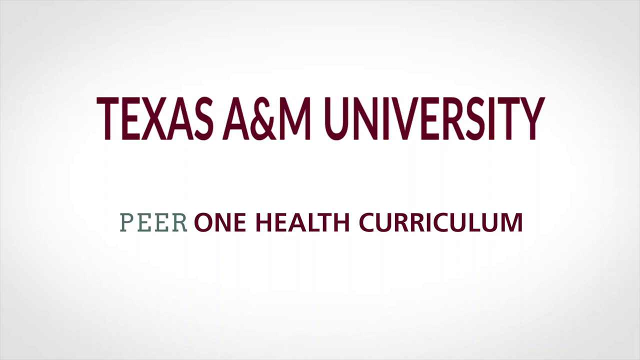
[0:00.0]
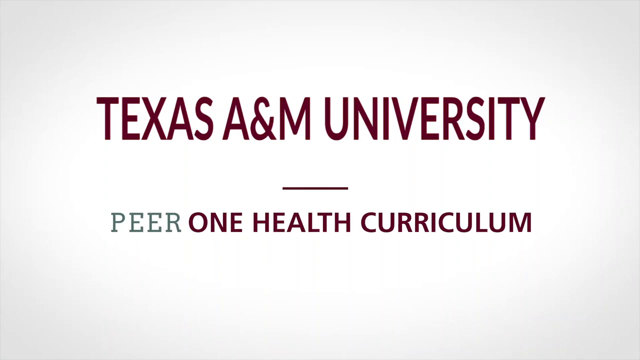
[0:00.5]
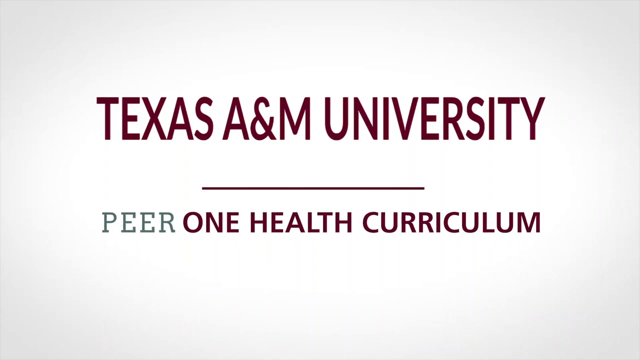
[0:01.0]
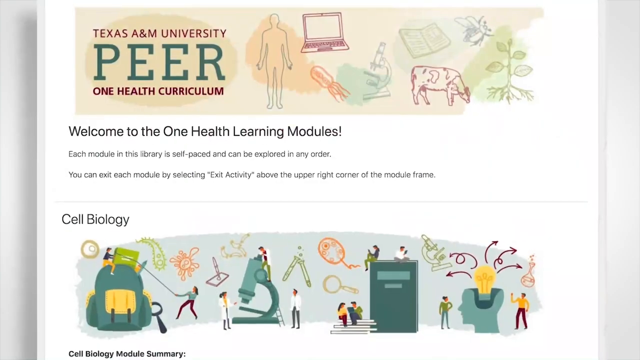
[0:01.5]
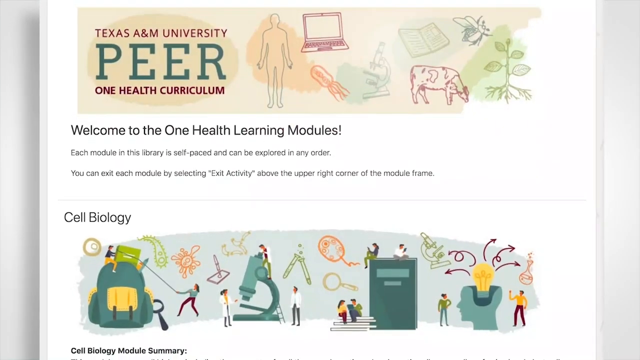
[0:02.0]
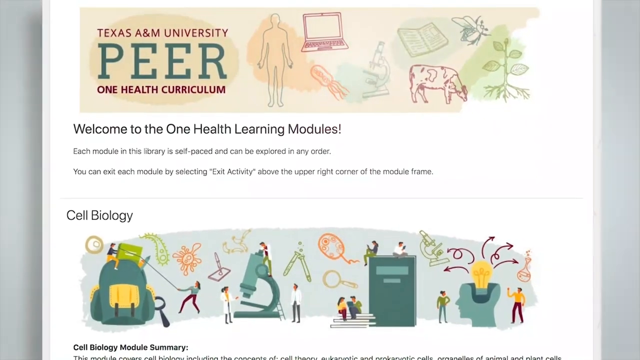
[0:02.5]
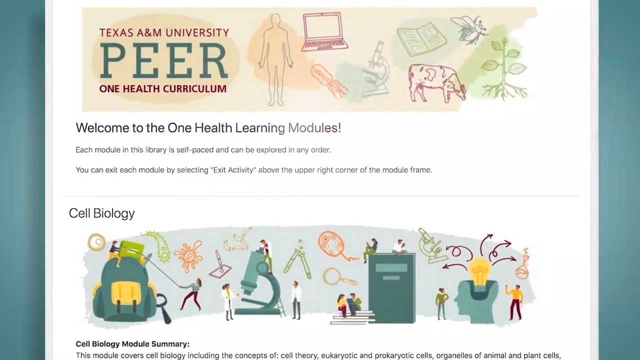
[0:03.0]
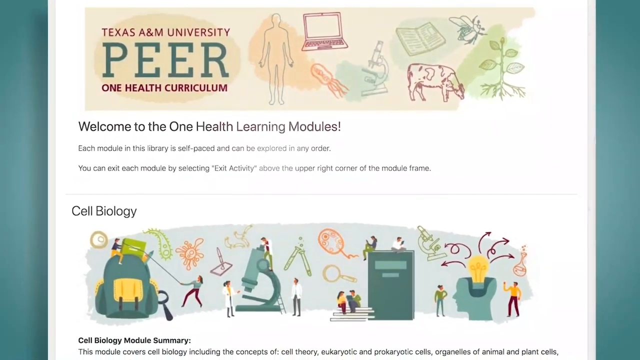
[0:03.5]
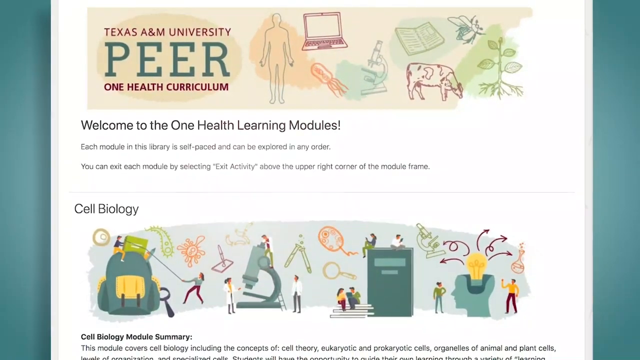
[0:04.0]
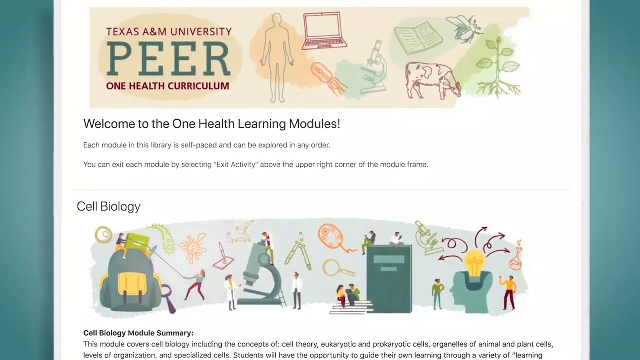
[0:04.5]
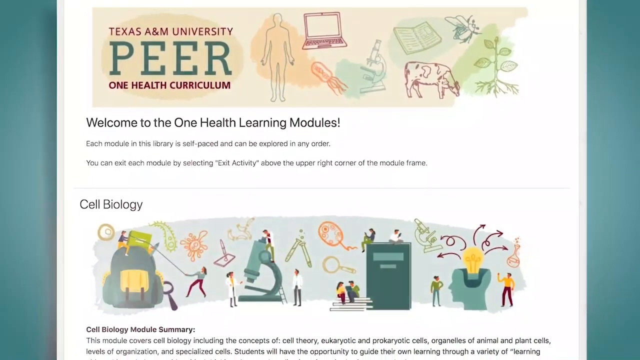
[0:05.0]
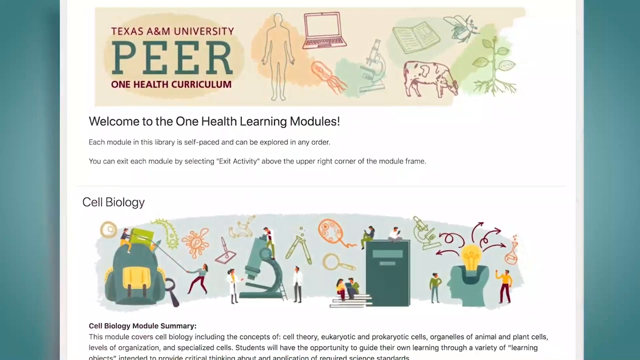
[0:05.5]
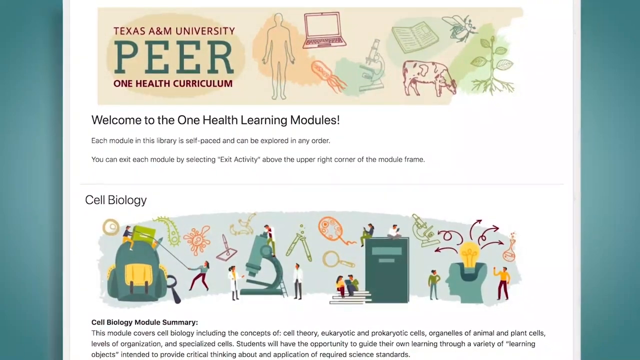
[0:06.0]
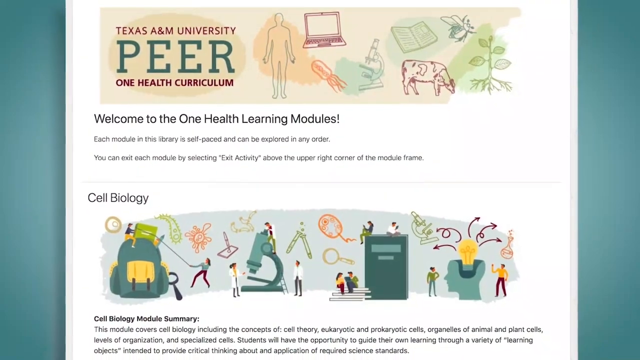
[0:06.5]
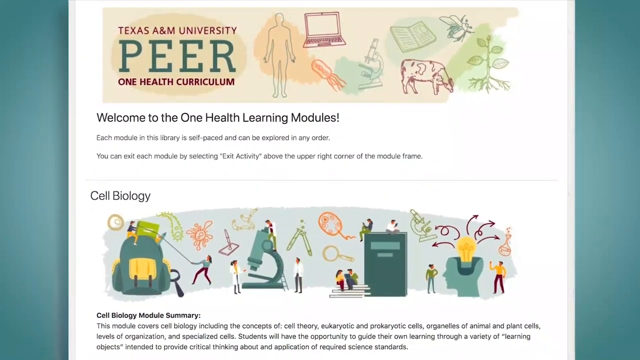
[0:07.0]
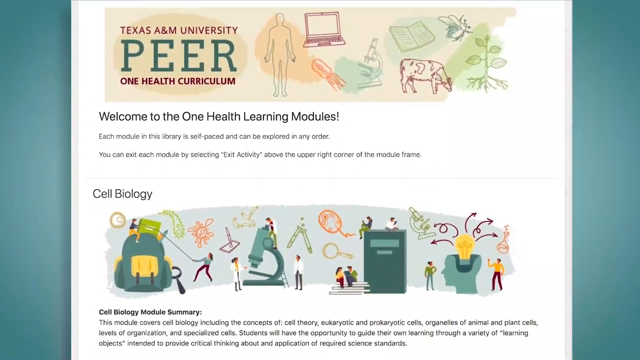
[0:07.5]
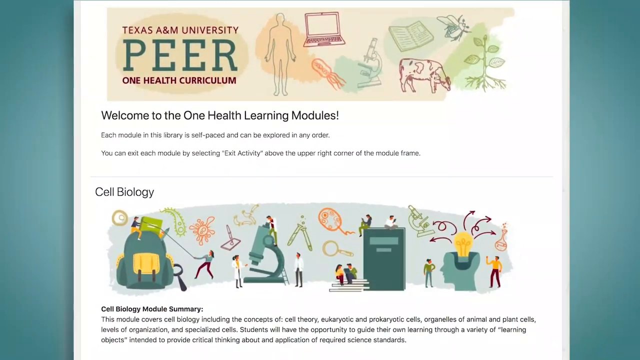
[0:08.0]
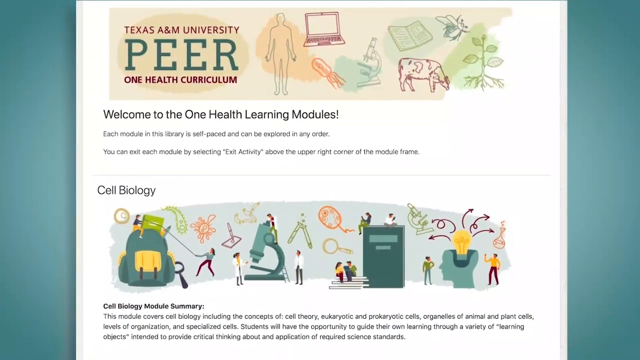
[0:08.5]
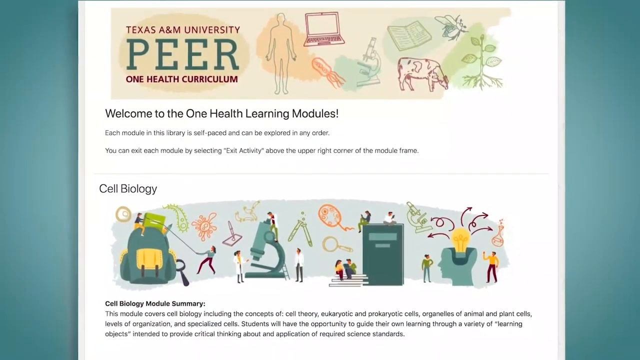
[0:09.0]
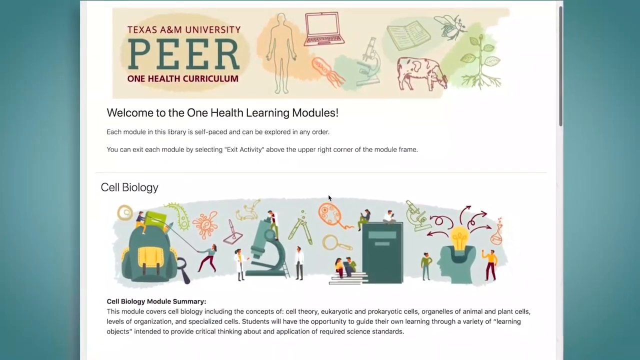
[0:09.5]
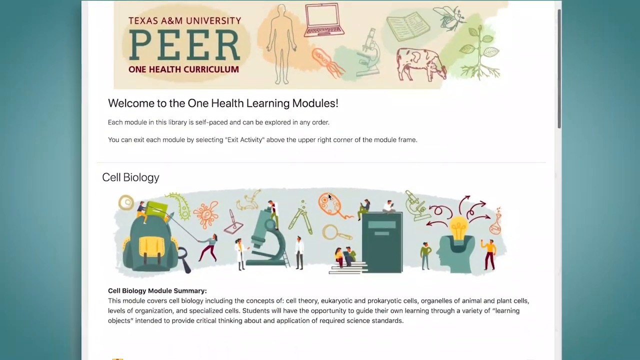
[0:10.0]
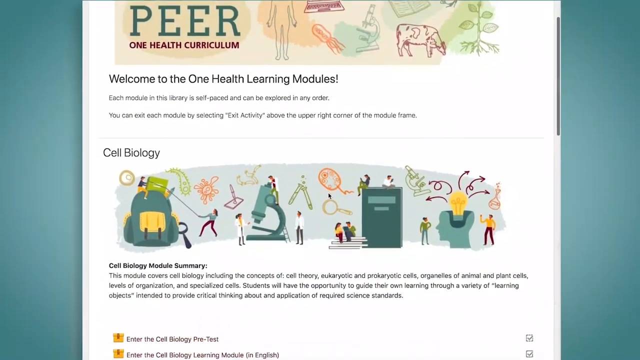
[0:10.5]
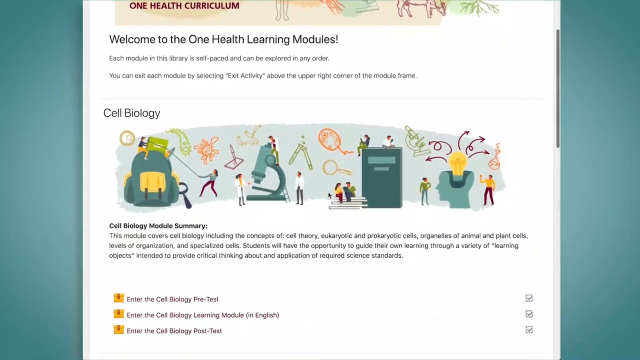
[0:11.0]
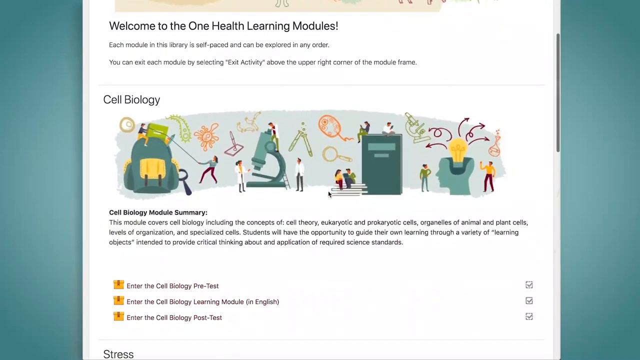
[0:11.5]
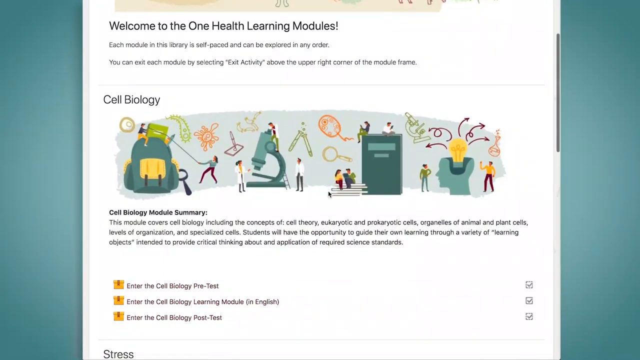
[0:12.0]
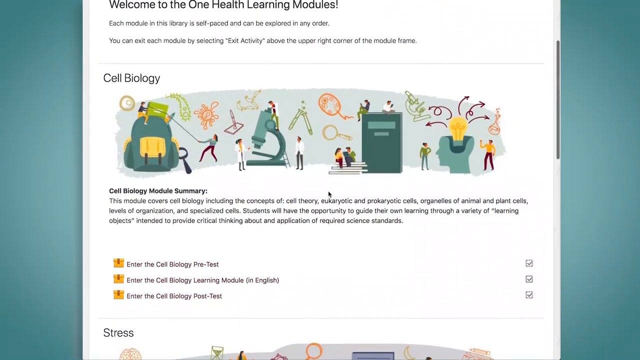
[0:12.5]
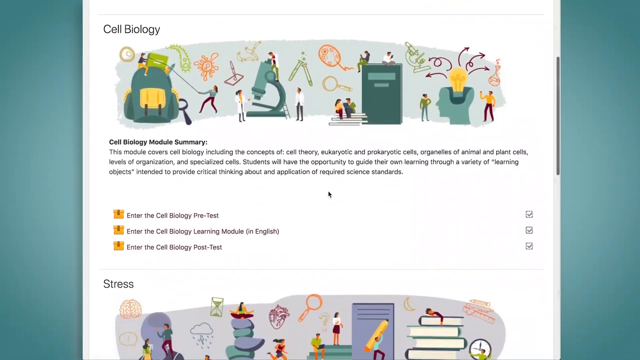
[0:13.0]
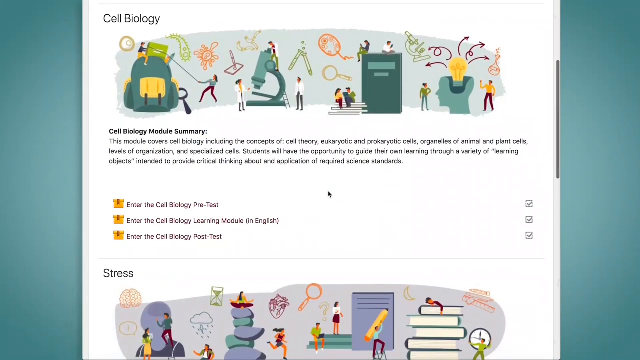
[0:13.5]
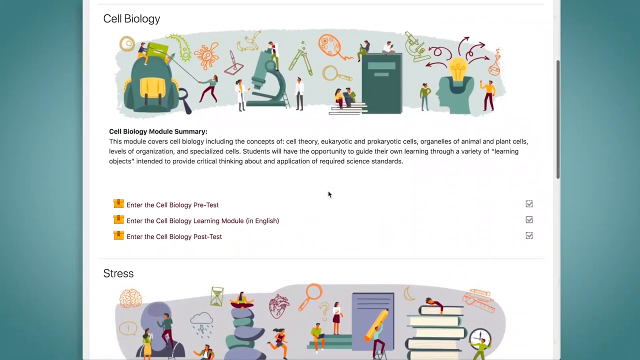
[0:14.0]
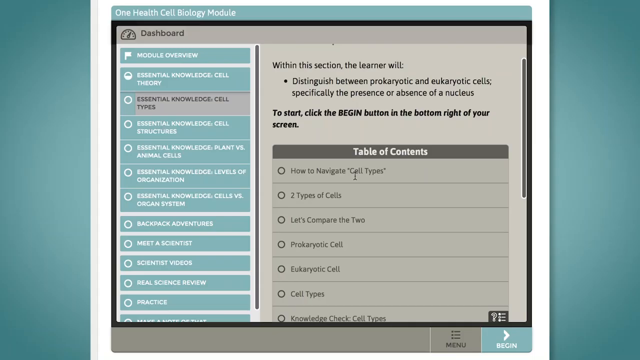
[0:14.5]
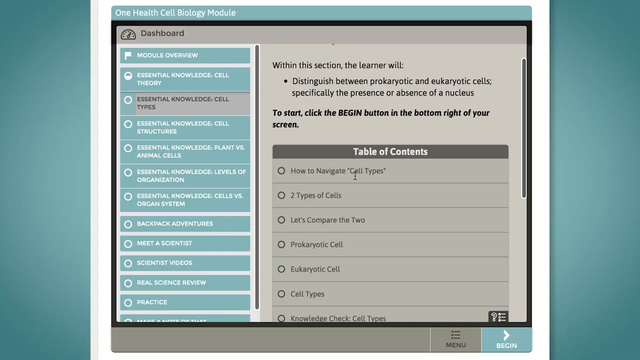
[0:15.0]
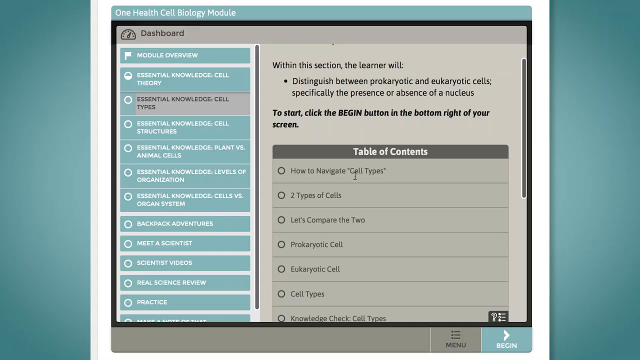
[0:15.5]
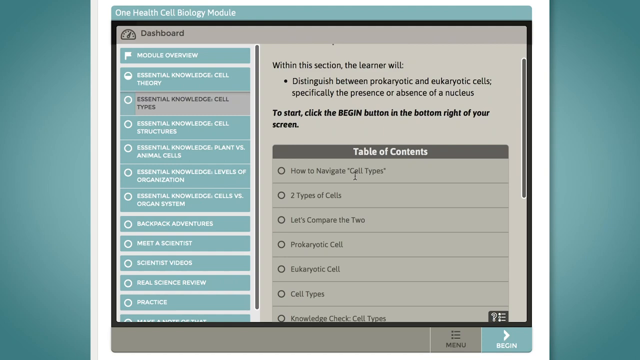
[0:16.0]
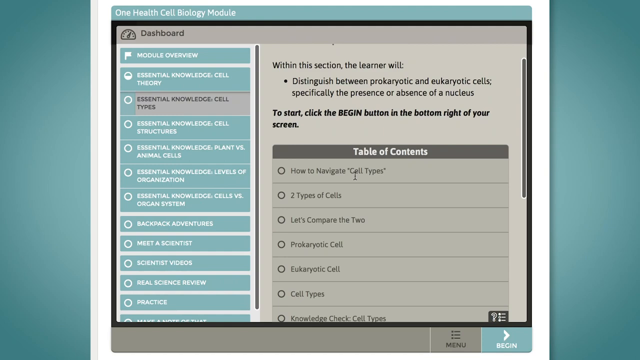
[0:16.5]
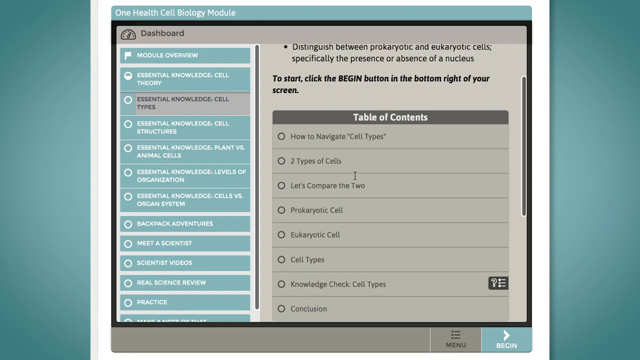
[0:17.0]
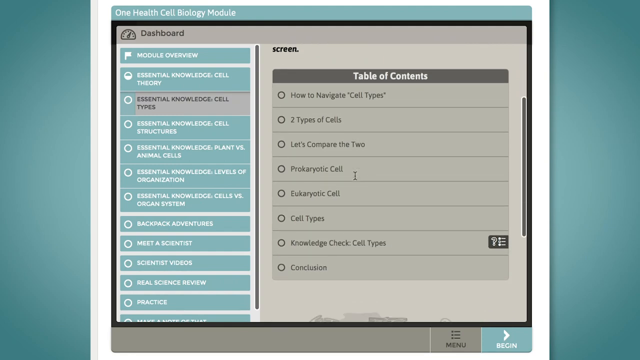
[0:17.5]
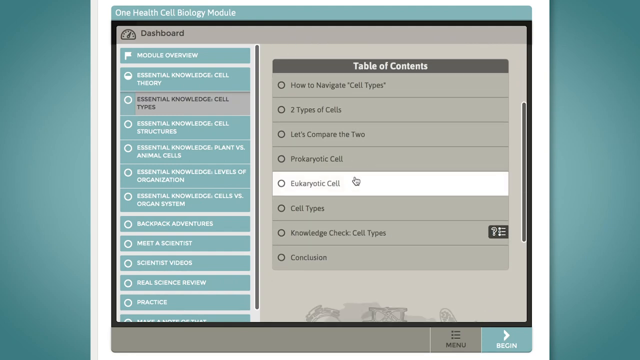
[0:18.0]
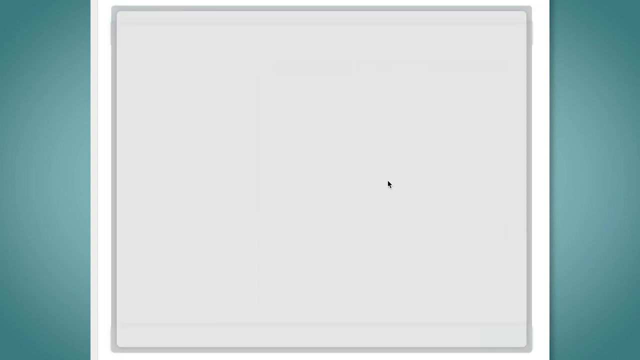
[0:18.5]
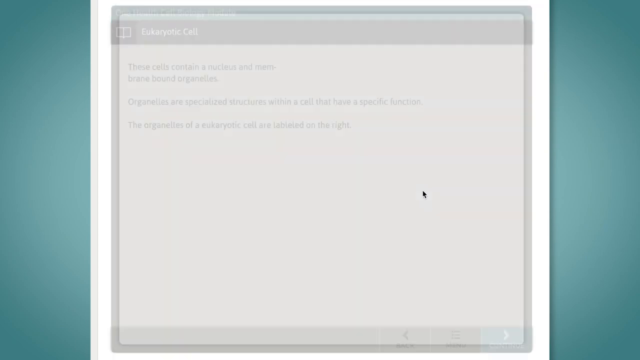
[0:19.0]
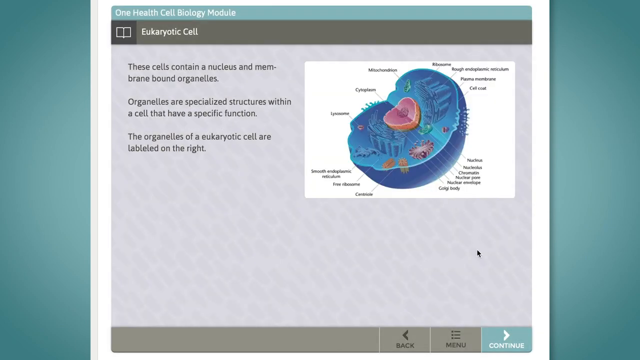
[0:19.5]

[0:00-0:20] On a white background, centered dark maroon text reads "Texas A&M University", with smaller green text underneath reading "PEER" and then, in dark maroon again, "One Health Curriculum". Next comes a page with a white background whose header says "Texas A&M Peer One Health Curriculum", followed by line drawings of a human figure, a laptop, a microscope, a cow, a plant, a bug and a book. Beneath them, black text on white reads "Welcome to the One Health Learning Modules. Each module in this library is self-paced and can be explored in any order. You can exit each module by selecting Exit Activity above the upper right corner of the module frame." The first module shown is Cell Biology, with illustrations in tones of green and a summary in black underneath. Boxes are labeled "Enter the Cell Biology Pretest". A dashboard with a table of contents appears, then a diagram of a cell, all in color, and the page is scrolled through.